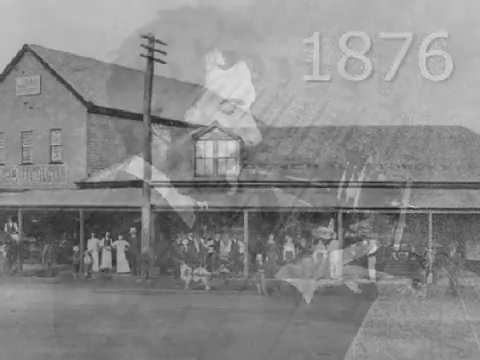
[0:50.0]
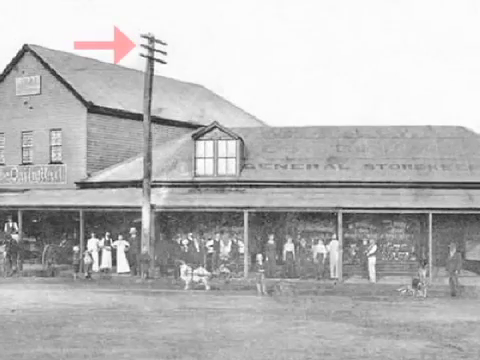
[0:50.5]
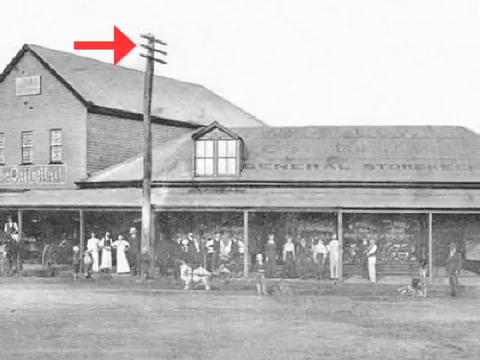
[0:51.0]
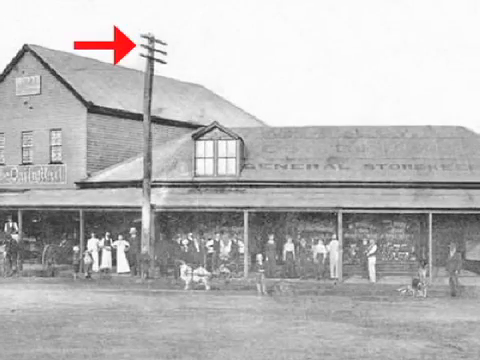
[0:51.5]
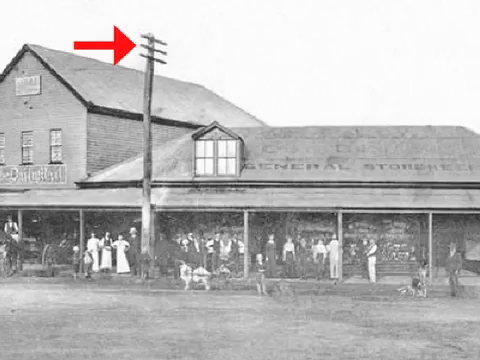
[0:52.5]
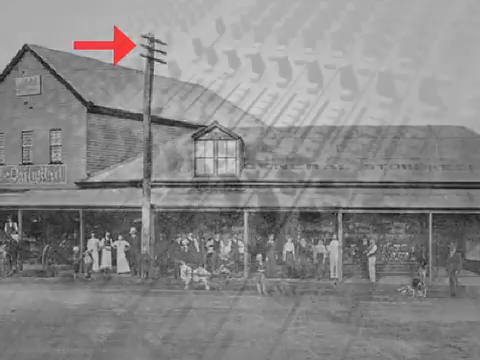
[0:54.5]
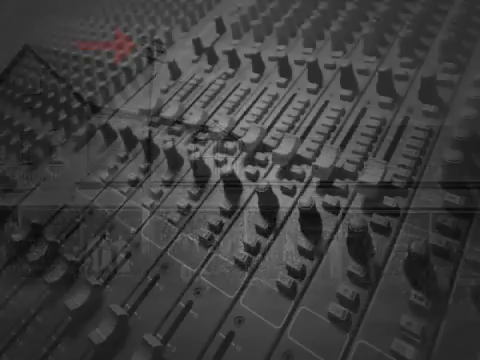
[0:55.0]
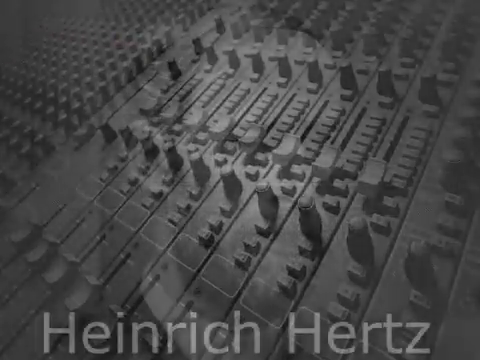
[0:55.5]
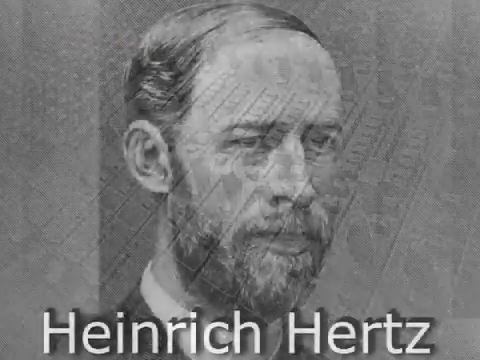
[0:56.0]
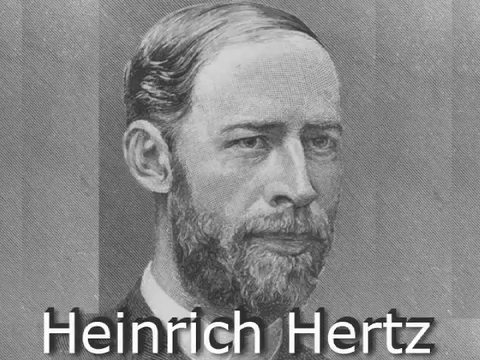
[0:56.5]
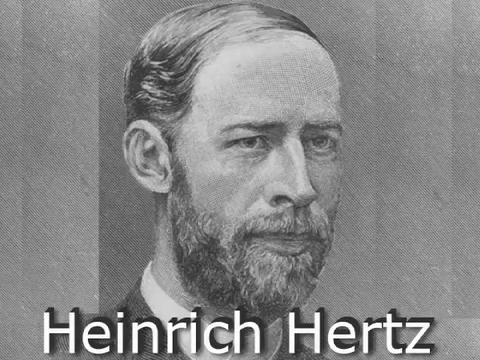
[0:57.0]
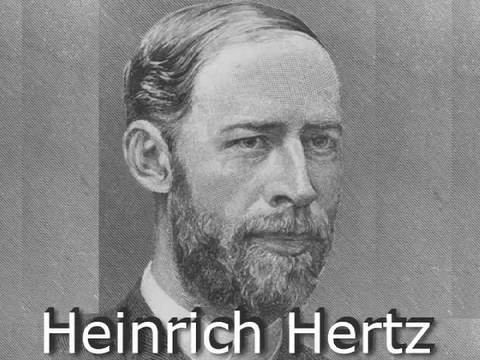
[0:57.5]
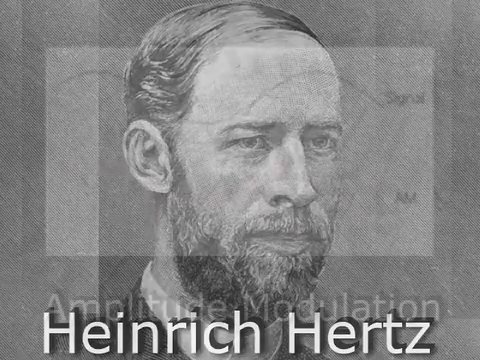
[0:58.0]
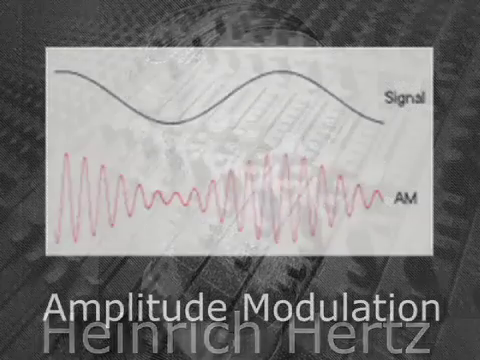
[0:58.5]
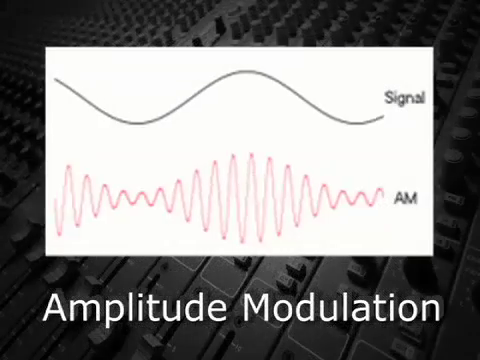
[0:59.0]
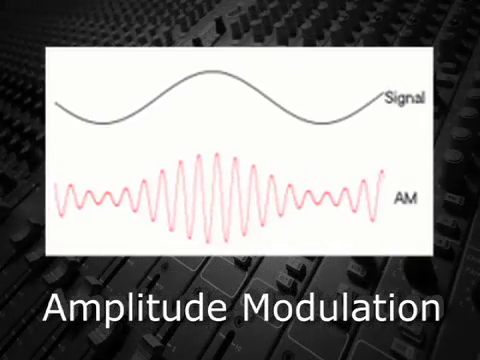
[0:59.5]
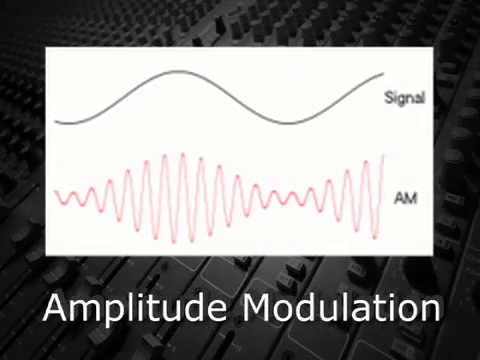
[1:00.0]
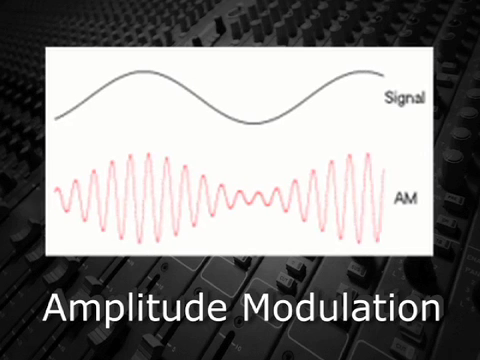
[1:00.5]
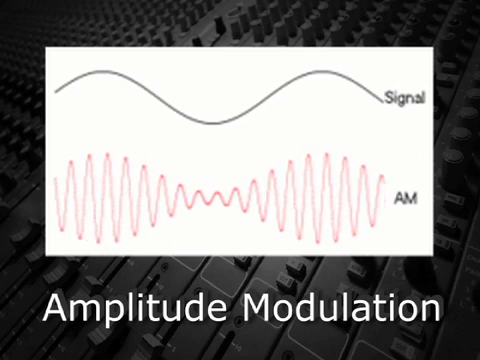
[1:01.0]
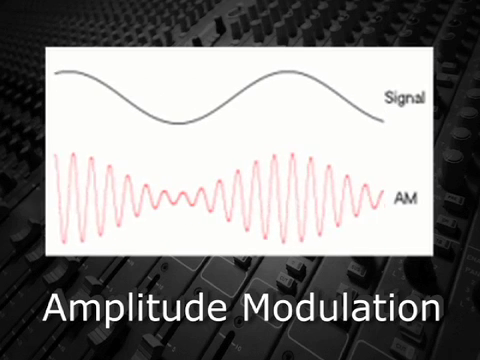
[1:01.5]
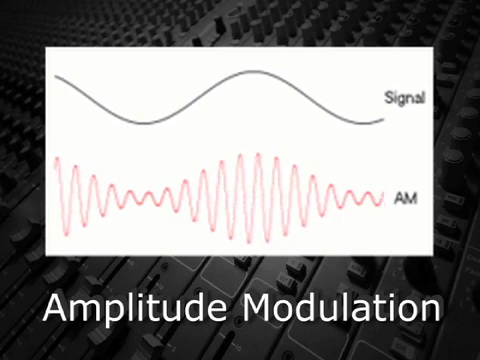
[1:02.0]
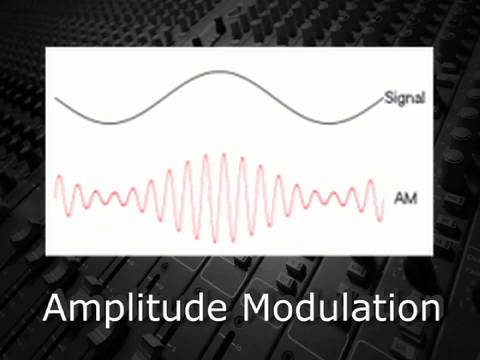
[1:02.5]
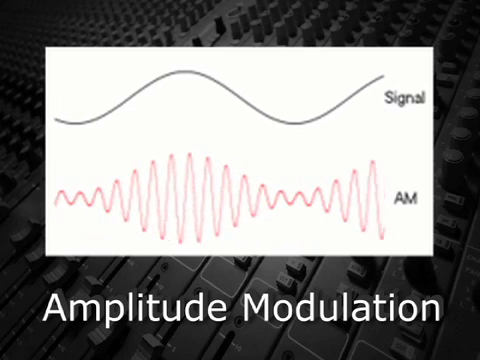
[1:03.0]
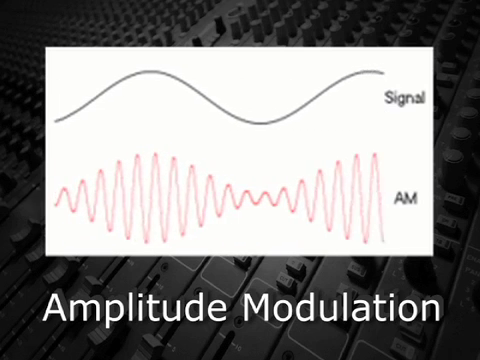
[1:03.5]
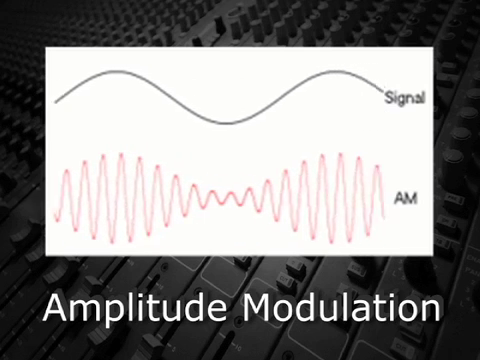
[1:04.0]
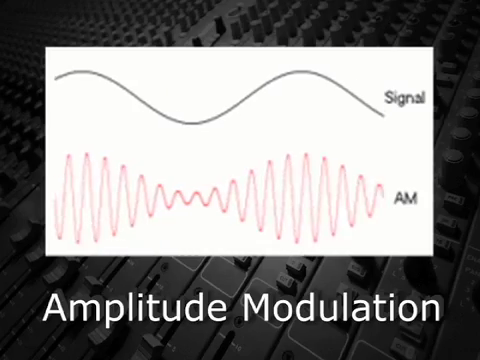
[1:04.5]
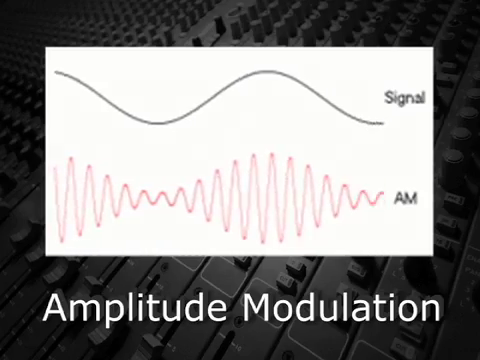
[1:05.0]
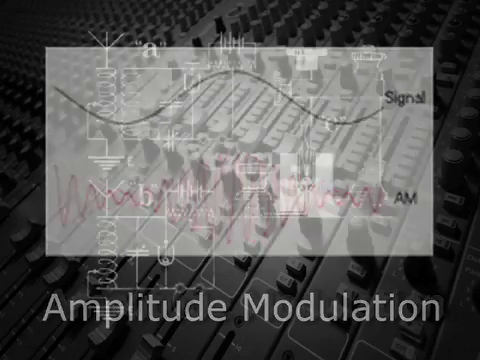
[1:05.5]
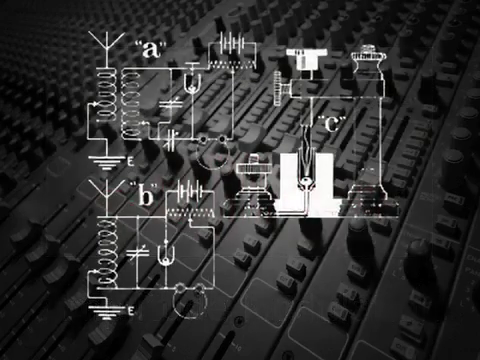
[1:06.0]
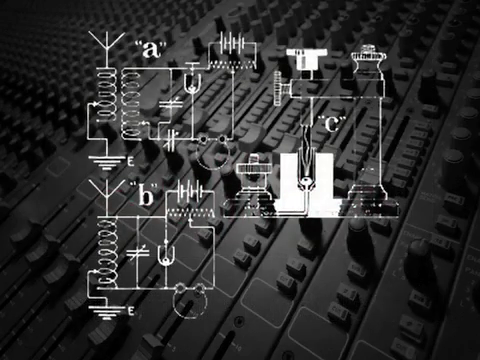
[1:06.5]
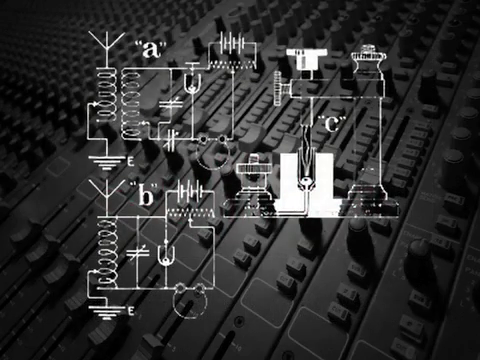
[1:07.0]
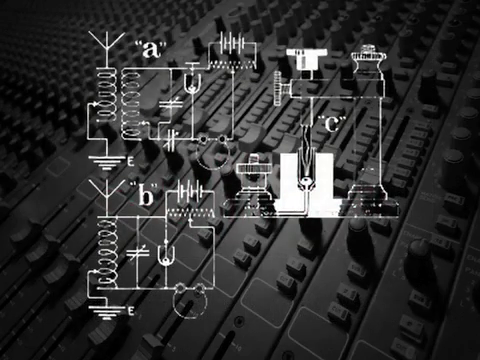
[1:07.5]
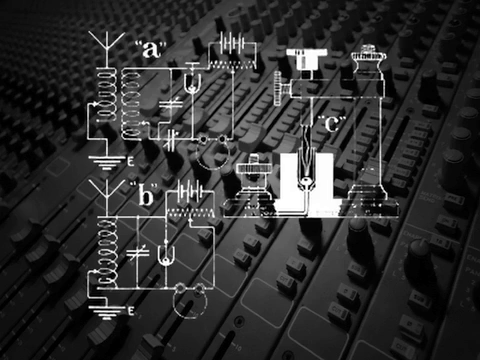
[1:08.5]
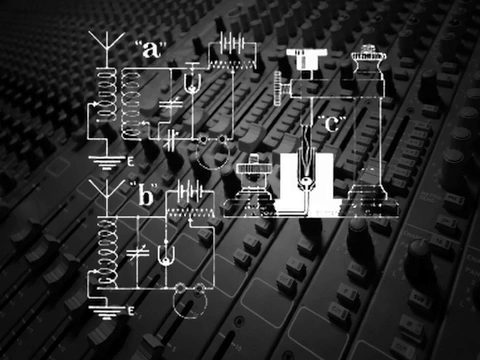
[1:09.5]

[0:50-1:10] A very old black-and-white photograph shows a pole of the kind associated with electricity, with a red arrow pointing at part of it and about three lines running across the pole. The video quickly transitions to another historical figure, Henrich Hertz, in a black-and-white portrait. An animated image then shows waves: the top one is a slower wave labeled "signal," and the bottom one, labeled "am," is a red wavy line. At the bottom of the image is the label "amplitude modulation." A graph illustration design follows, with the background still showing the sound system seen earlier.